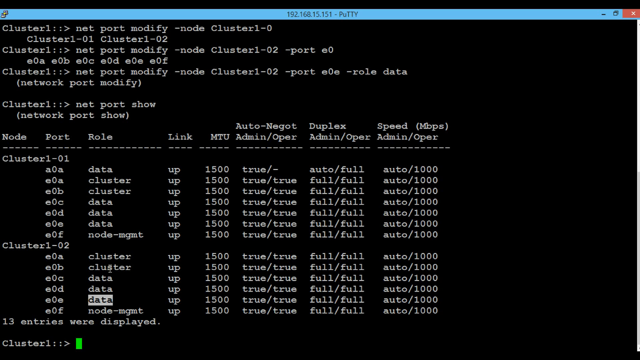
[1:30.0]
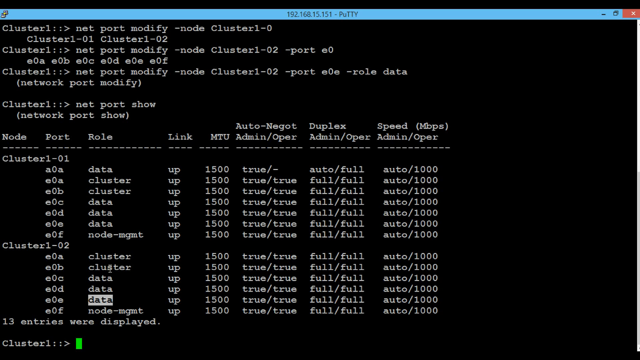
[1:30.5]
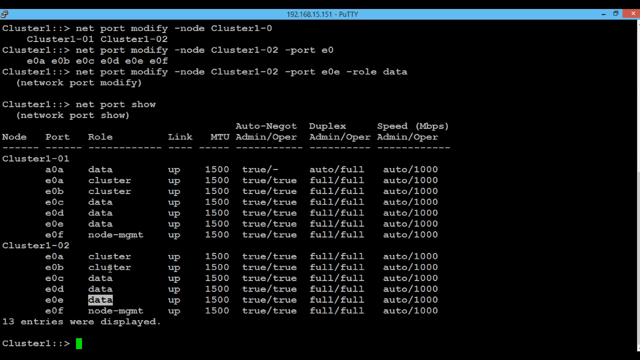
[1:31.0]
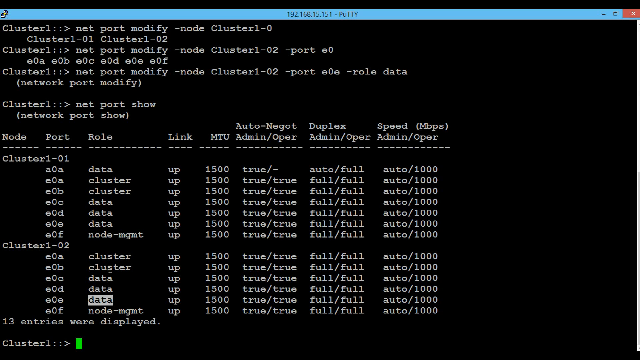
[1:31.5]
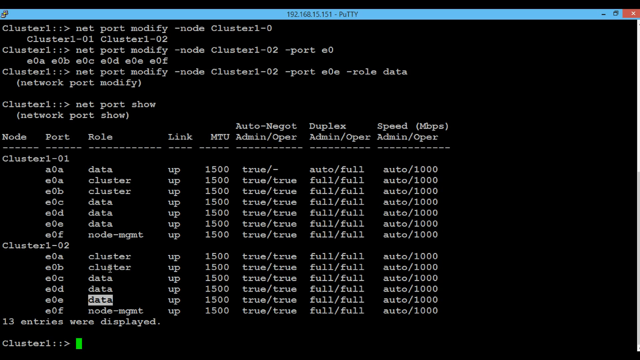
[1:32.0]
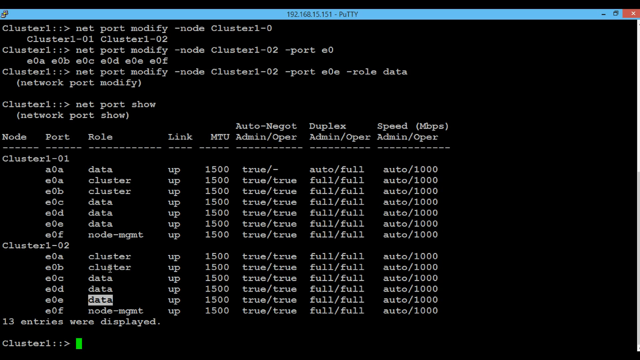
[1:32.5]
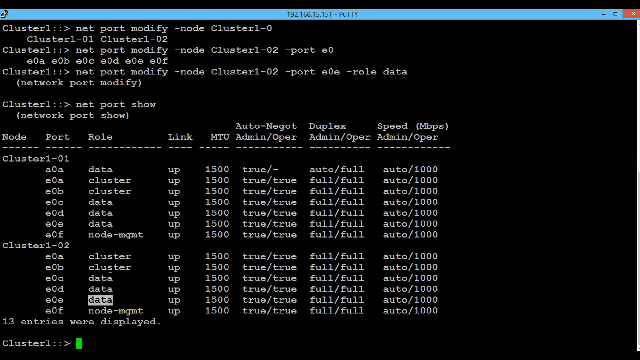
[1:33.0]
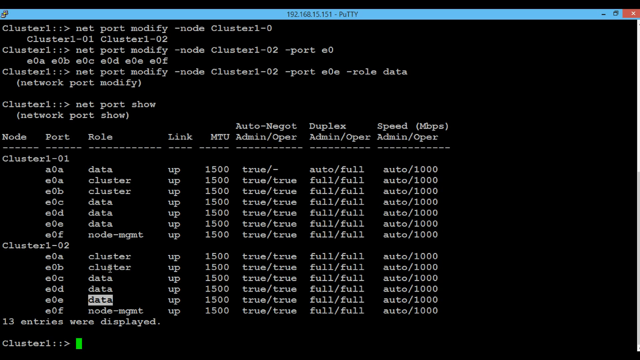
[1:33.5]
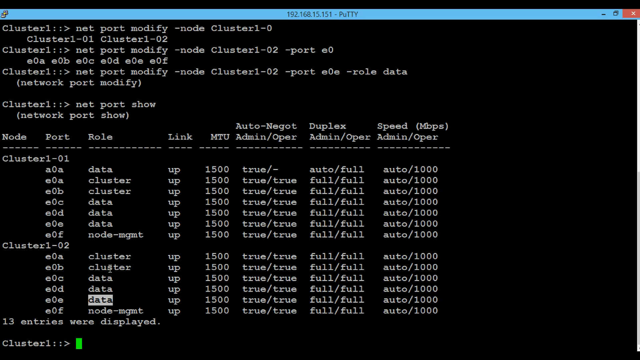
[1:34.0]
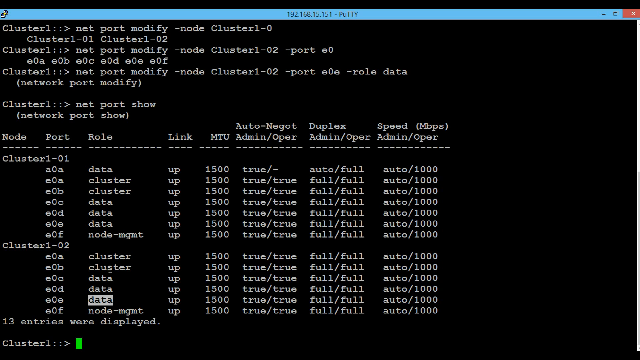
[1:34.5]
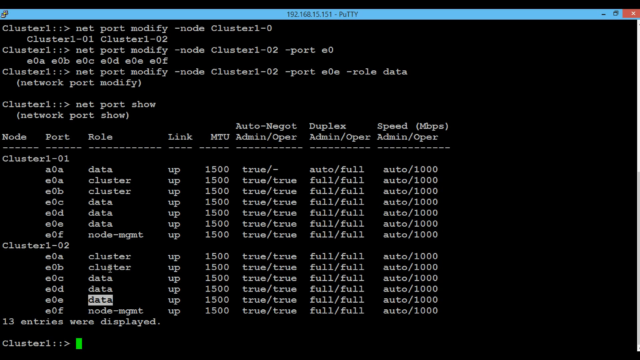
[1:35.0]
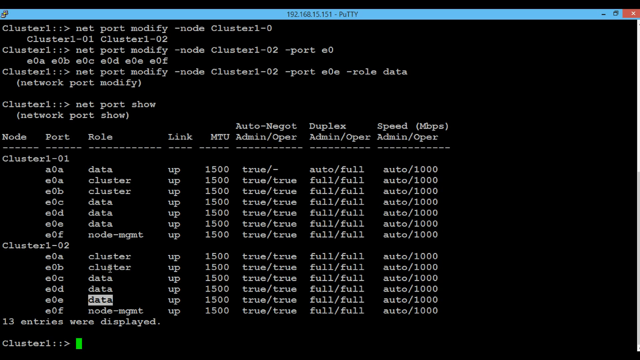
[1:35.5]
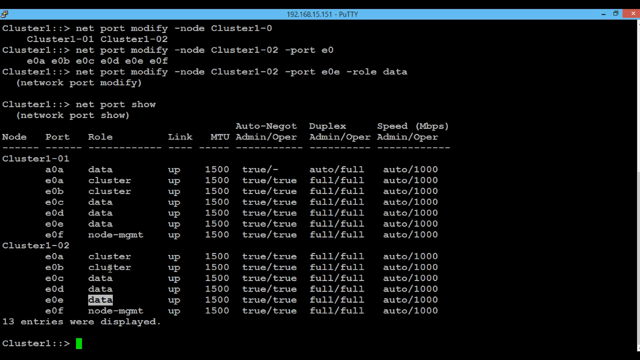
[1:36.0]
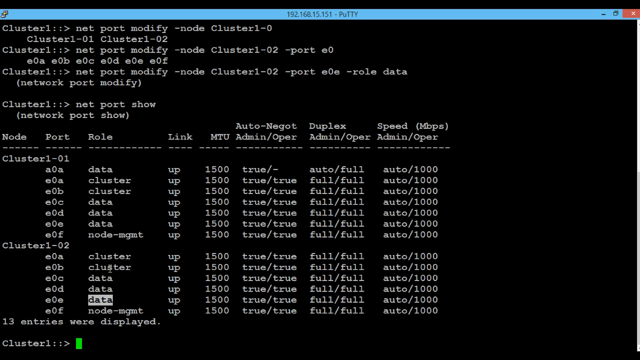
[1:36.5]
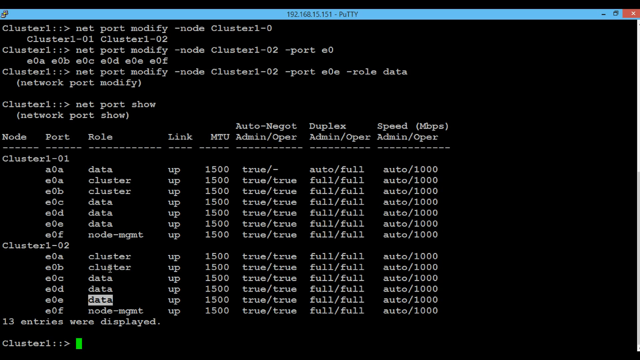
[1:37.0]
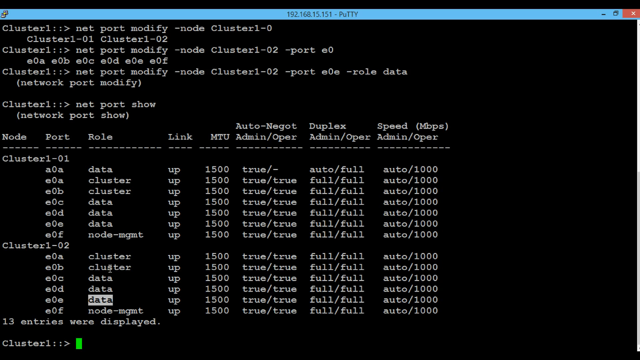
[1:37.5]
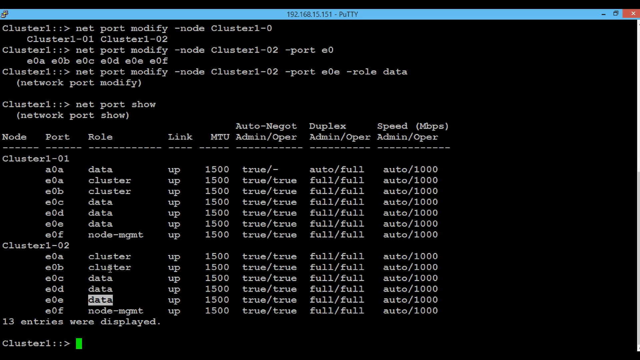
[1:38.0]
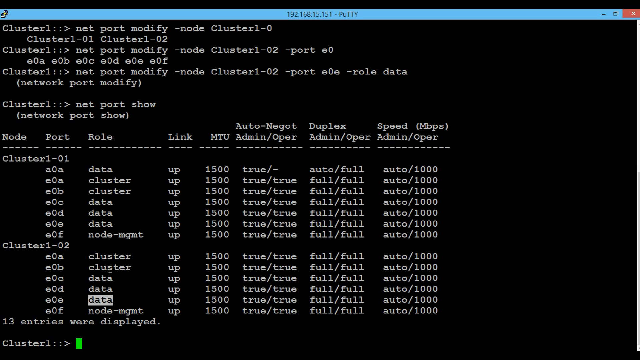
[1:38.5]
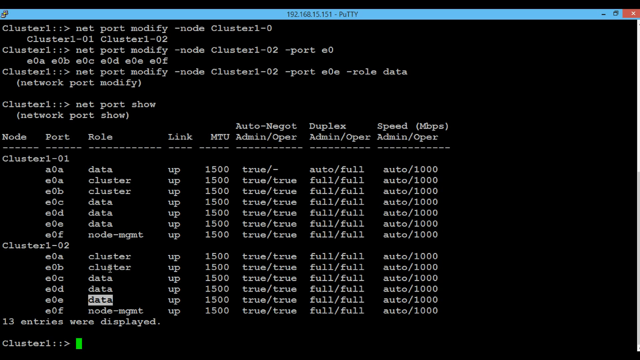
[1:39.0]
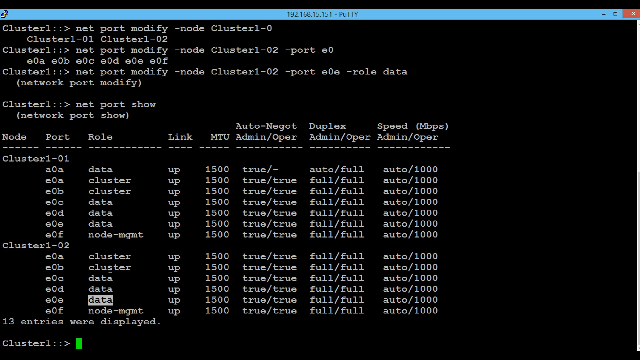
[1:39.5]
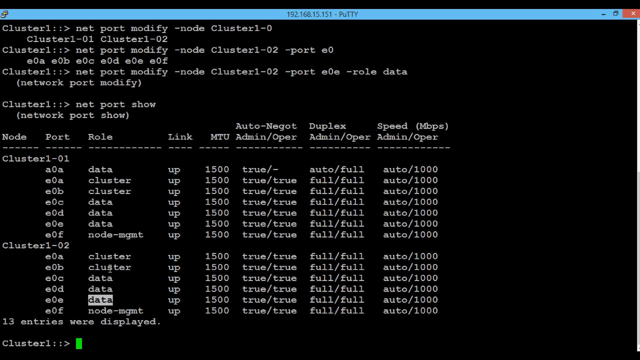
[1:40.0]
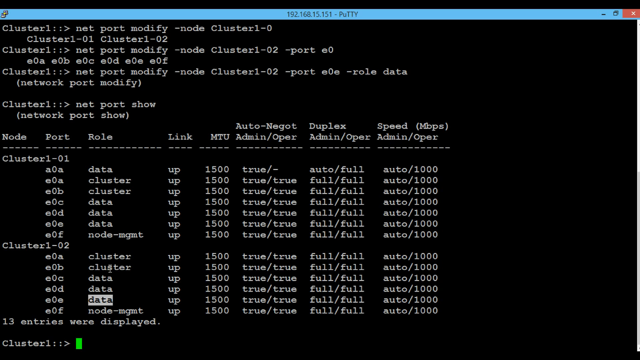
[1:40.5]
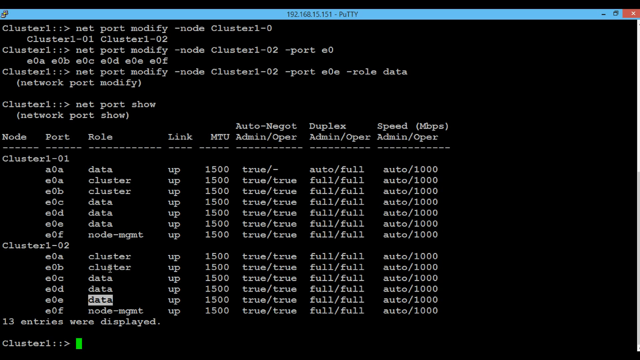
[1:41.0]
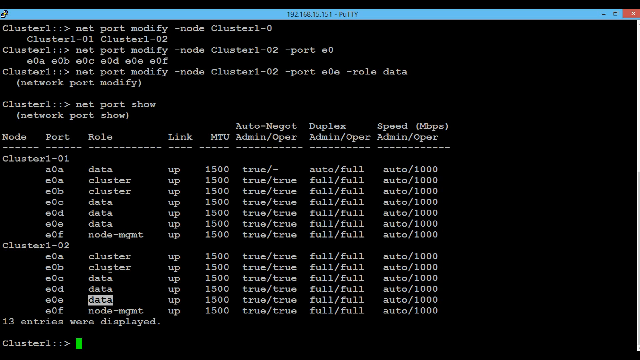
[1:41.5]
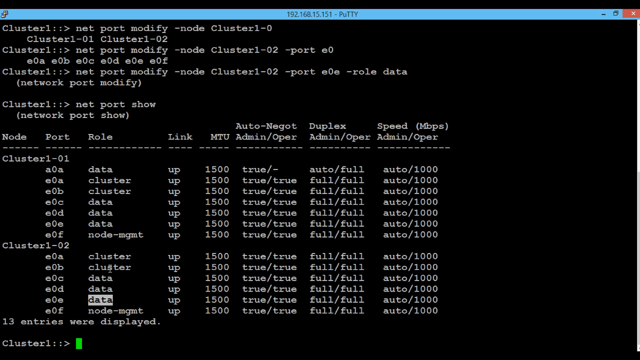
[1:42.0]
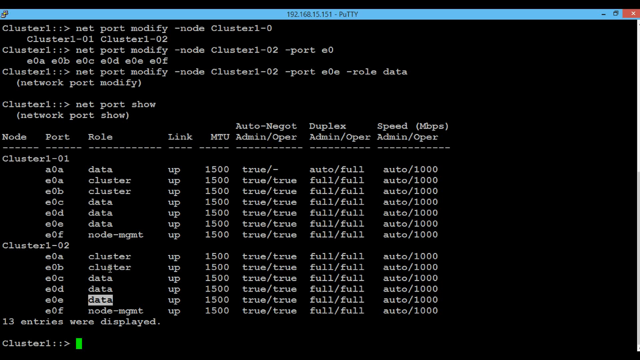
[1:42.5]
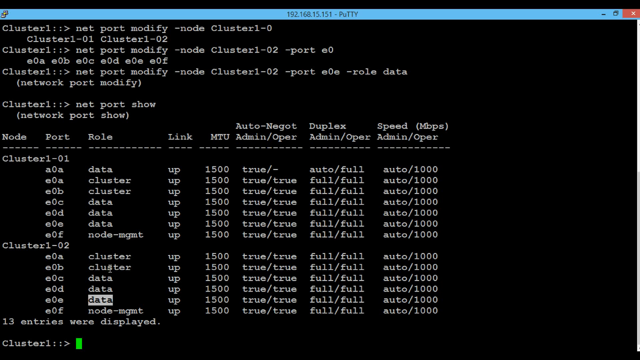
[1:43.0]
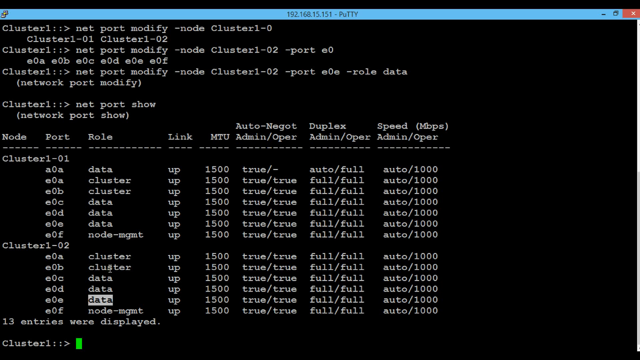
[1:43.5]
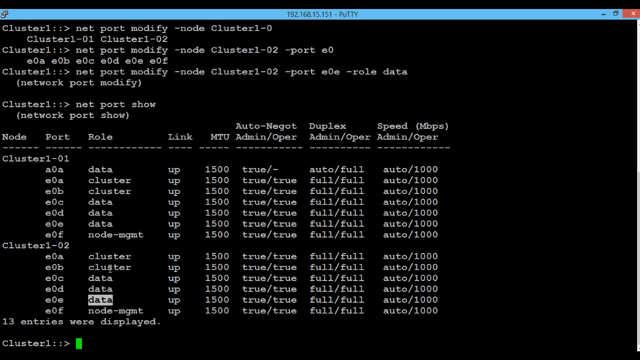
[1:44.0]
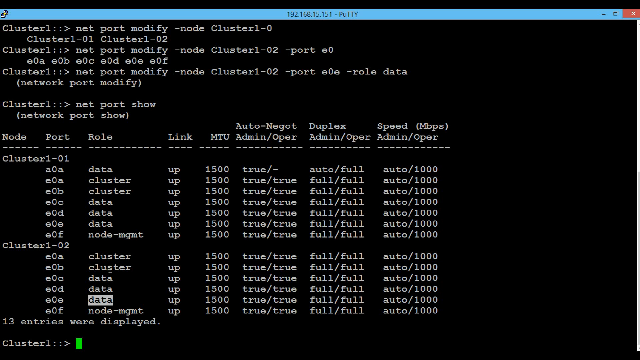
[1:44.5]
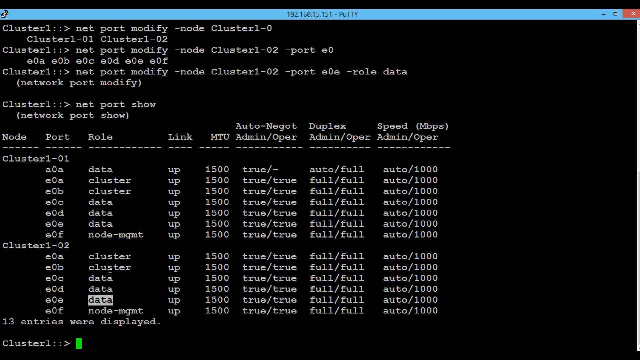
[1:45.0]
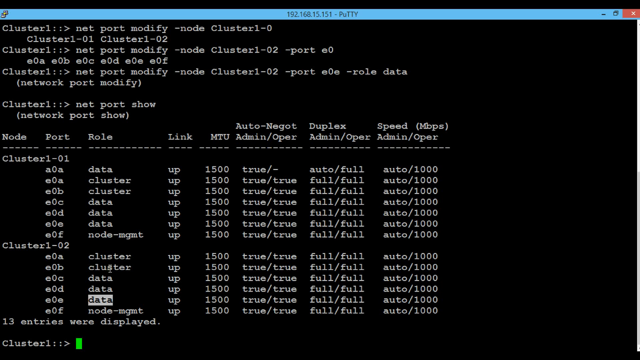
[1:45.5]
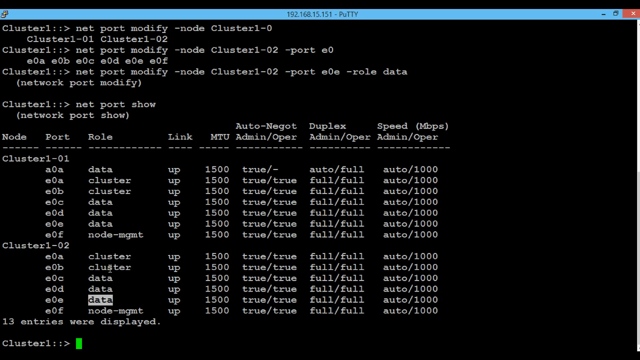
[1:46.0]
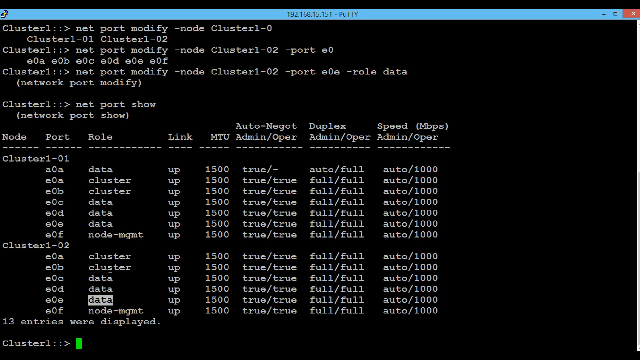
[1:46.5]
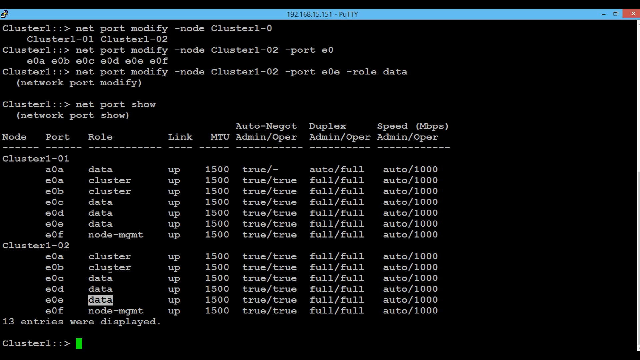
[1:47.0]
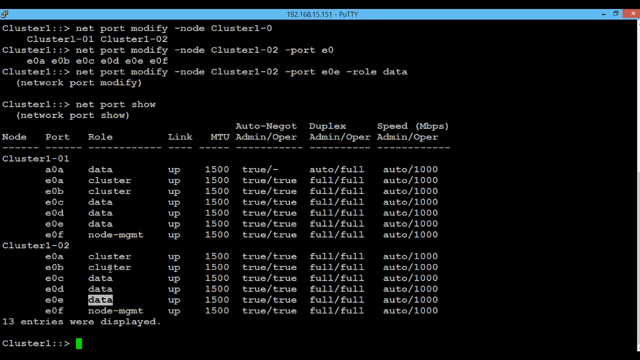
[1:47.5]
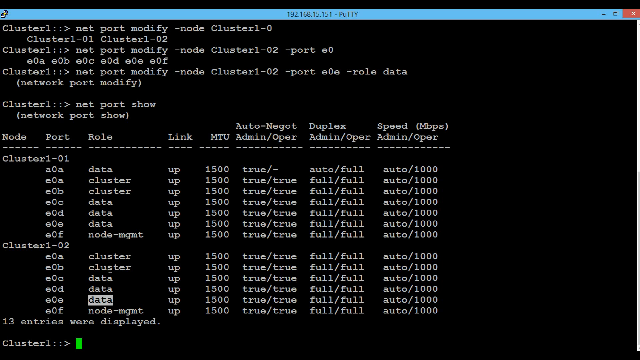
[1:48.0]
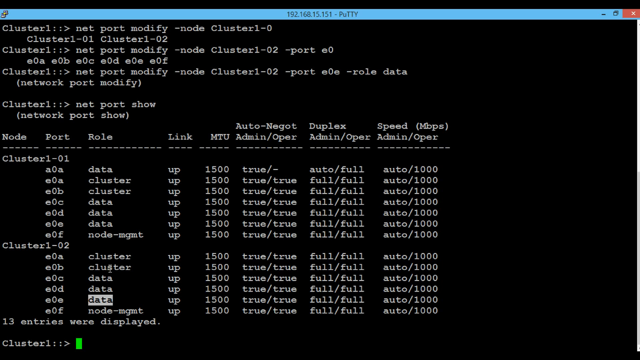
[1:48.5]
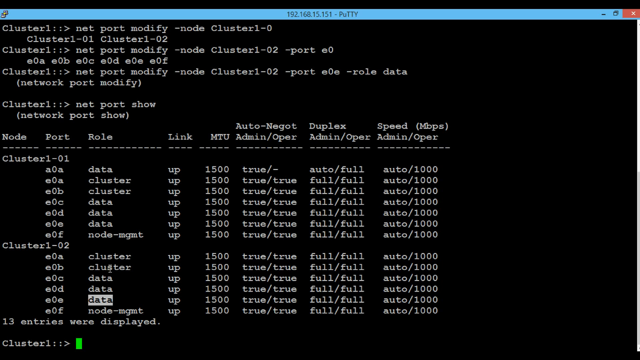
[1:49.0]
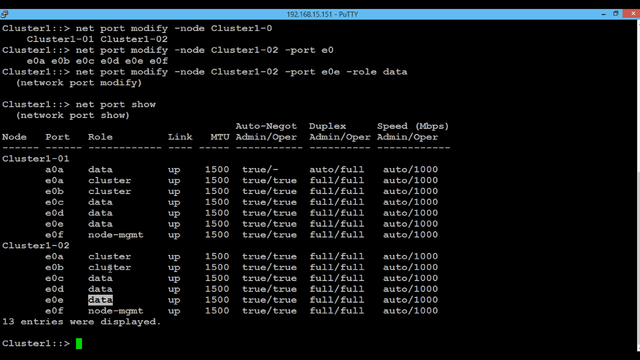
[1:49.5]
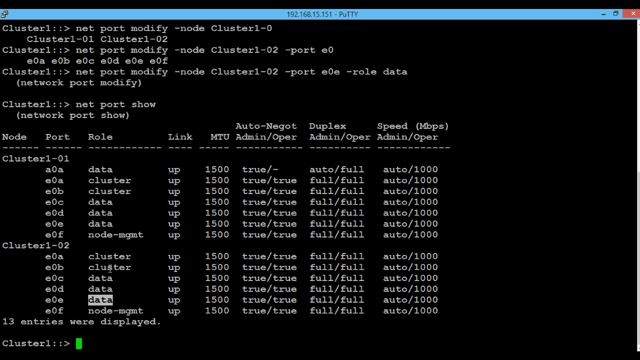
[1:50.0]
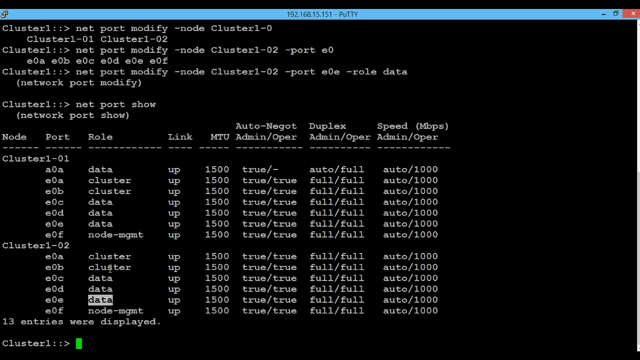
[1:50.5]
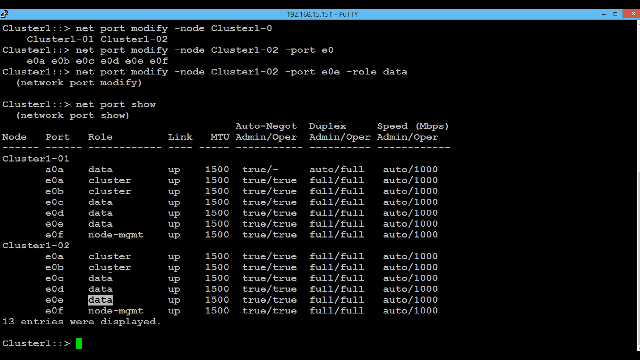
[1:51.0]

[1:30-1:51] The same command prompt screen shows four entries beginning with "cluster1::>". One reads "net port modify -node cluster1-0", another includes "1-02 -port e0", and another says "node cluster1-02 -port e0e -role data", which appears to be a command that was entered. Beneath that is "cluster1::> net port show" on the same line, and below the last entry "(network port show)". Multiple columns below list each cluster that was called up, with the link, role, port and mode, along with auto-negotiate, admin operator, duplex admin operator, and speed in megabits per second.